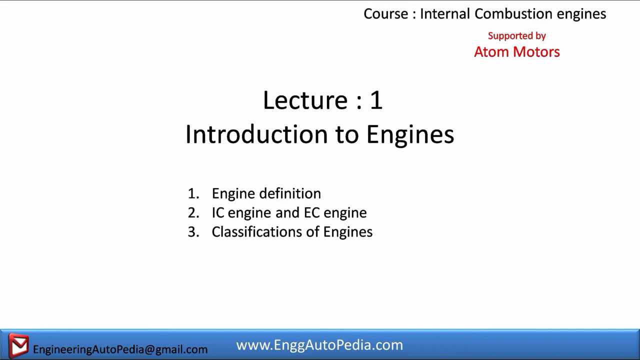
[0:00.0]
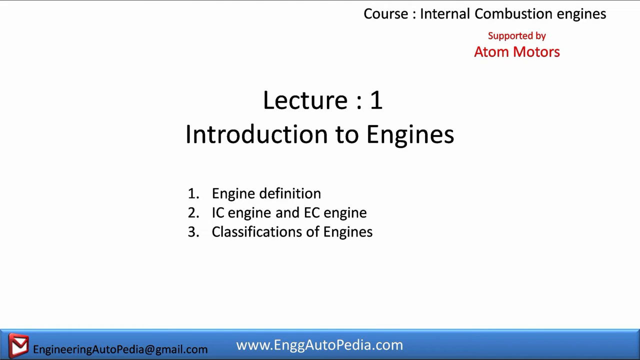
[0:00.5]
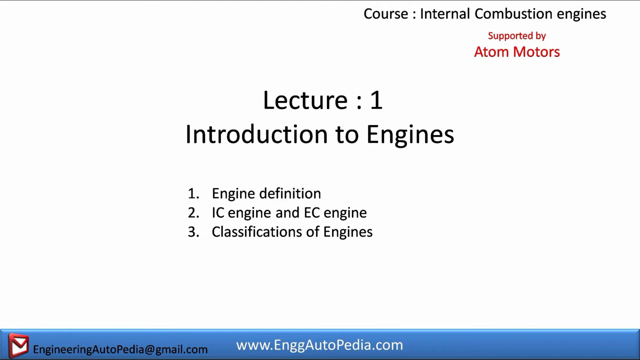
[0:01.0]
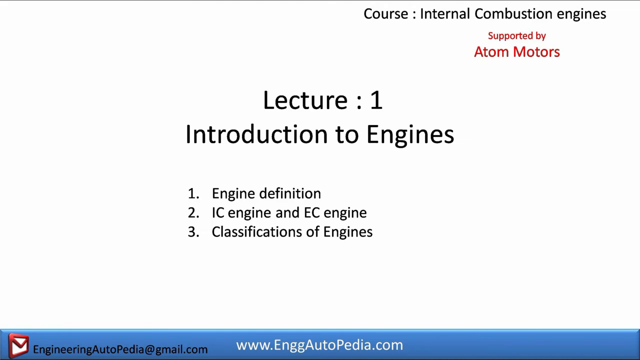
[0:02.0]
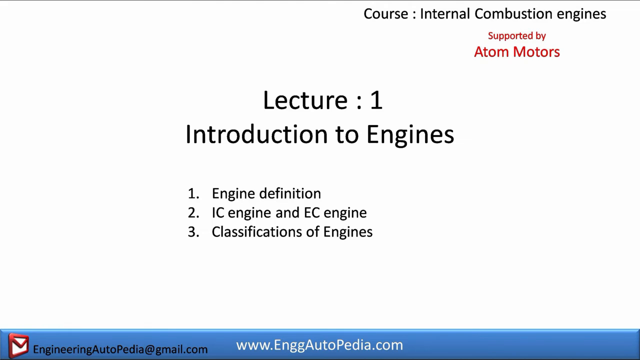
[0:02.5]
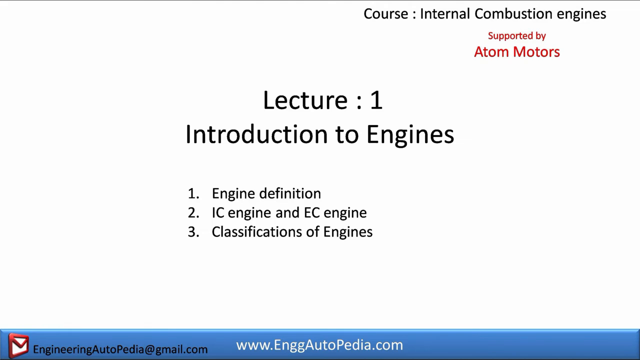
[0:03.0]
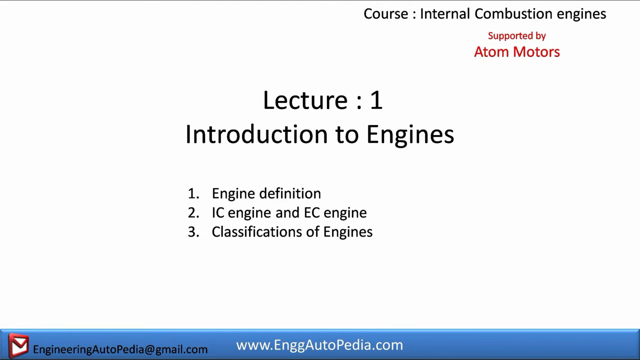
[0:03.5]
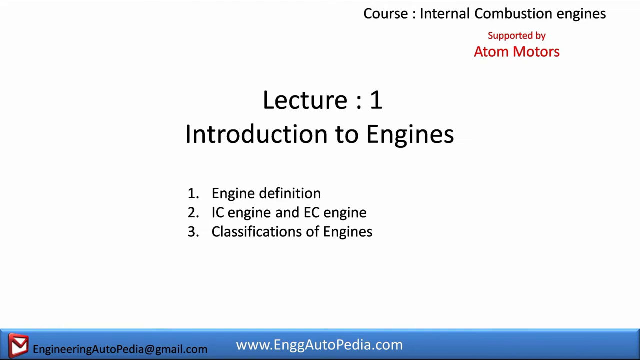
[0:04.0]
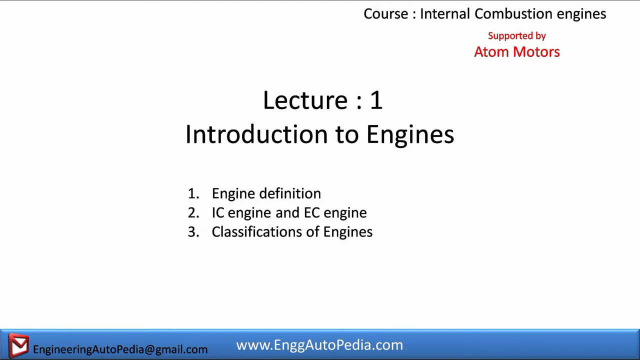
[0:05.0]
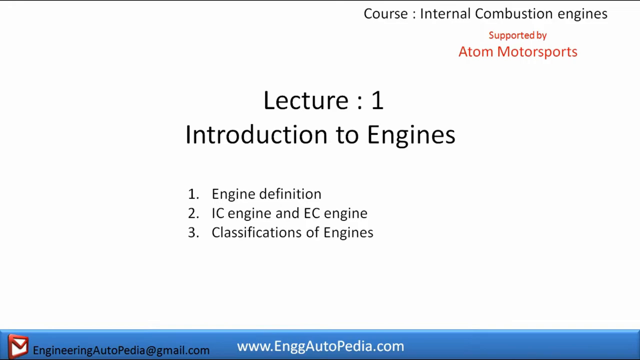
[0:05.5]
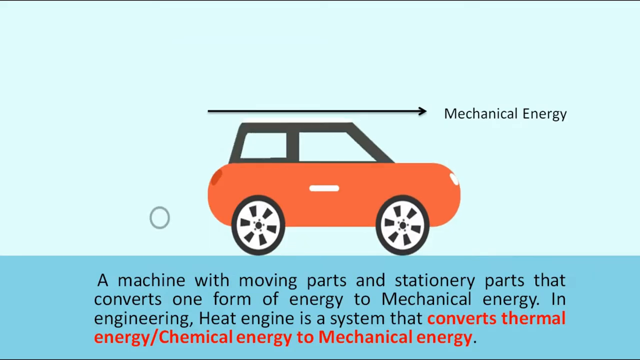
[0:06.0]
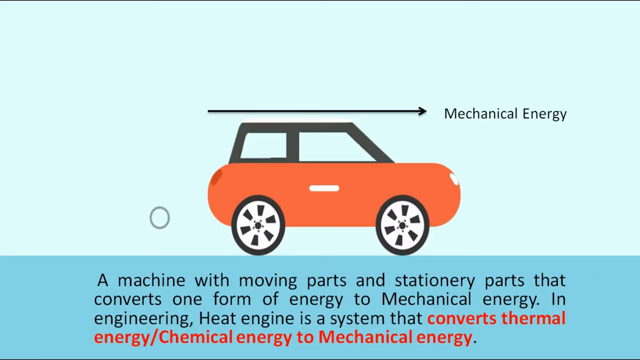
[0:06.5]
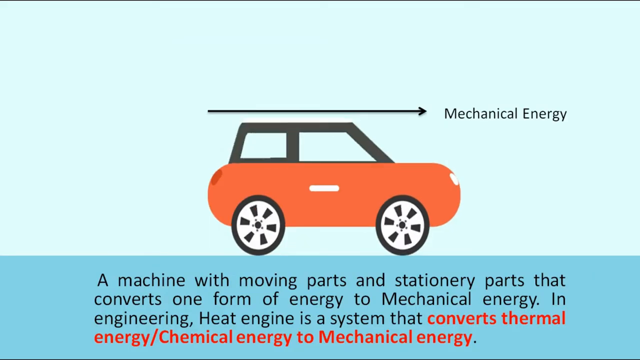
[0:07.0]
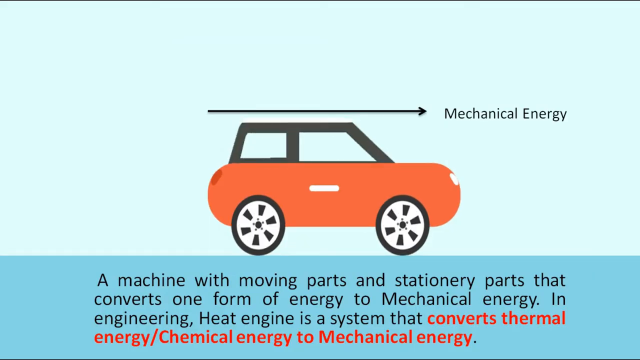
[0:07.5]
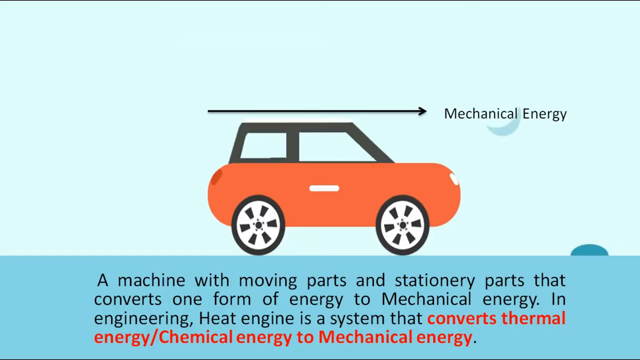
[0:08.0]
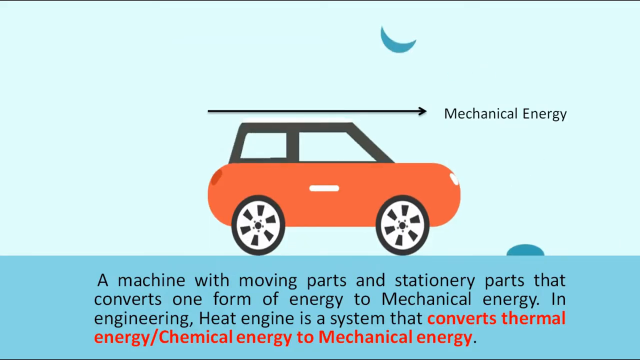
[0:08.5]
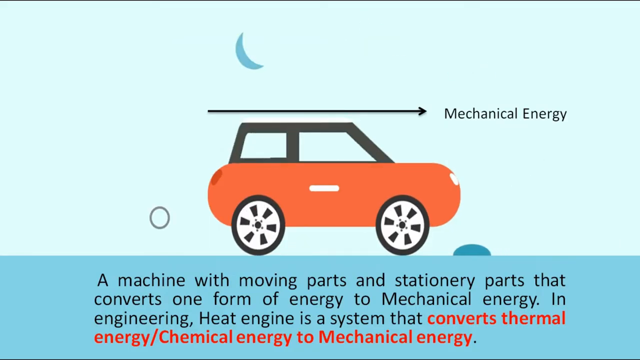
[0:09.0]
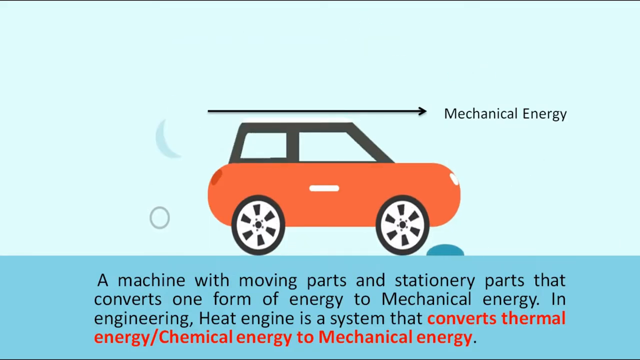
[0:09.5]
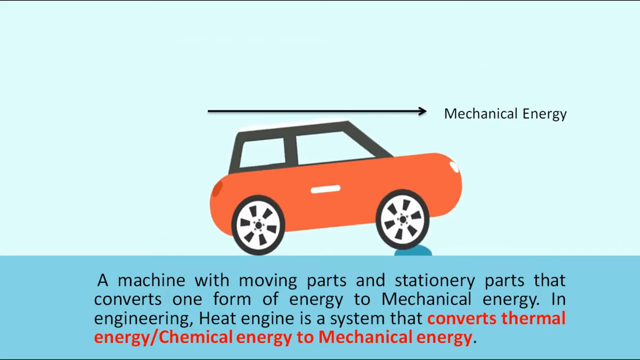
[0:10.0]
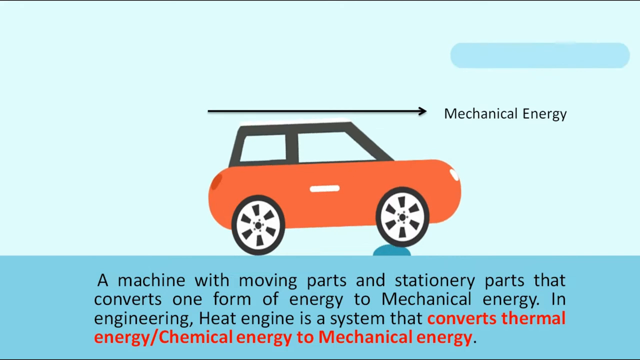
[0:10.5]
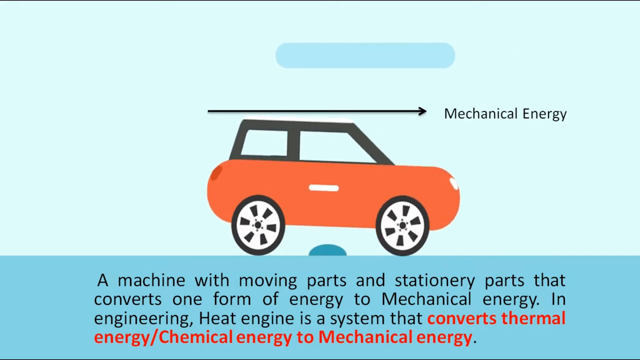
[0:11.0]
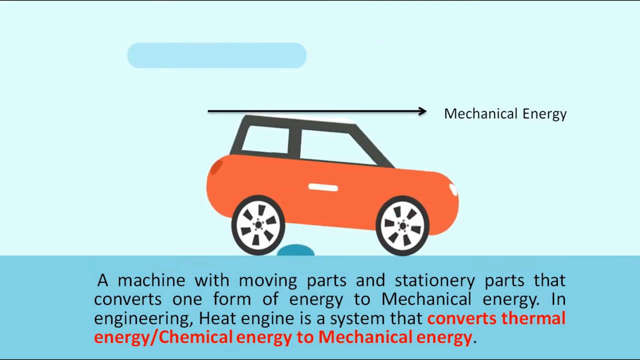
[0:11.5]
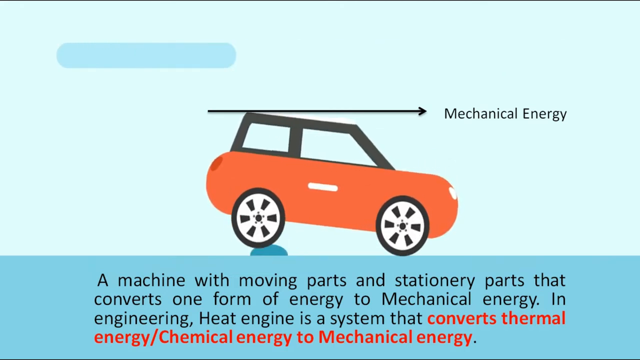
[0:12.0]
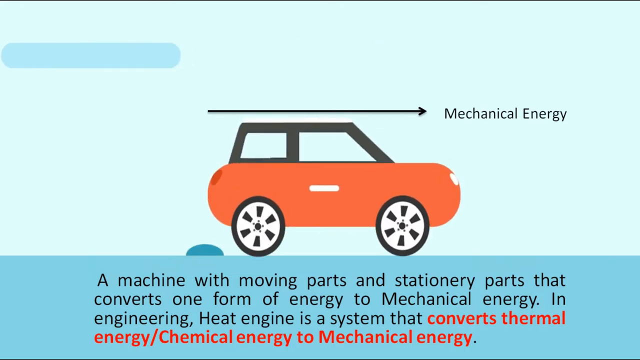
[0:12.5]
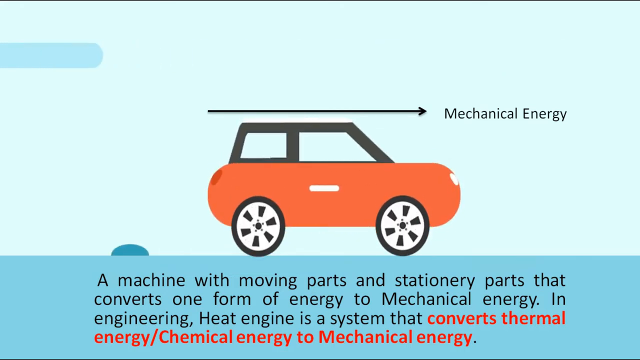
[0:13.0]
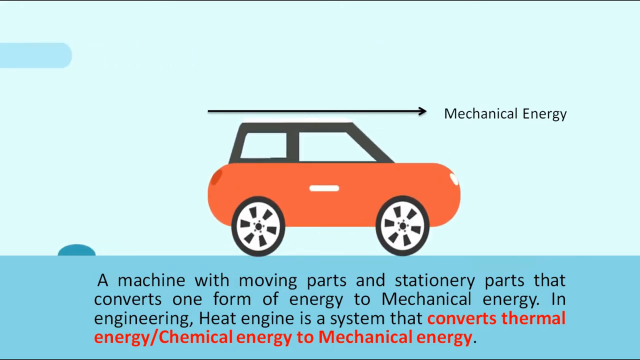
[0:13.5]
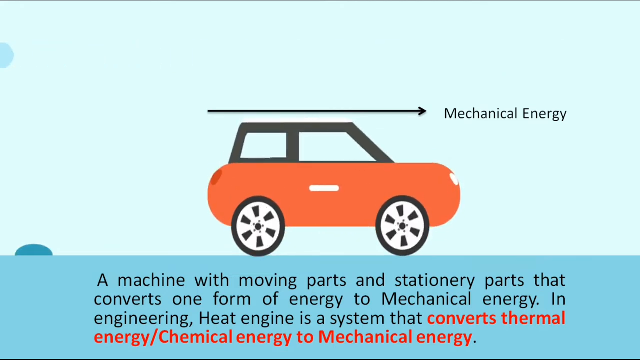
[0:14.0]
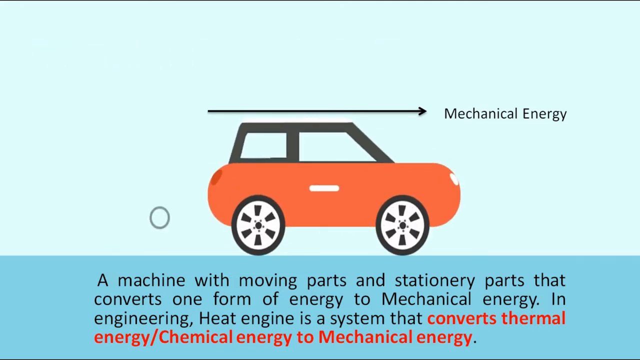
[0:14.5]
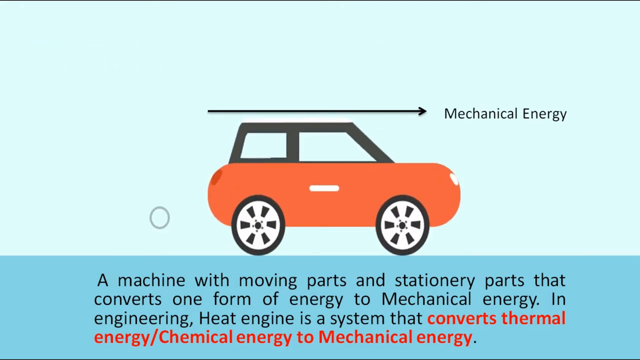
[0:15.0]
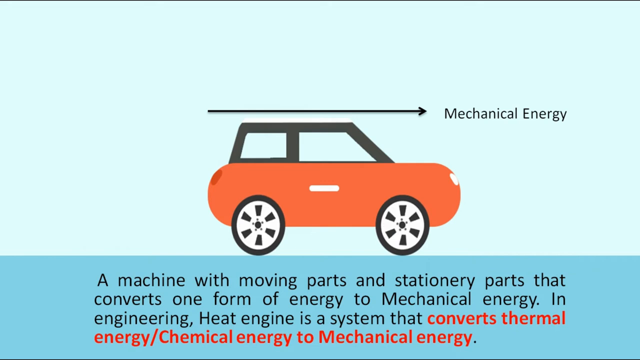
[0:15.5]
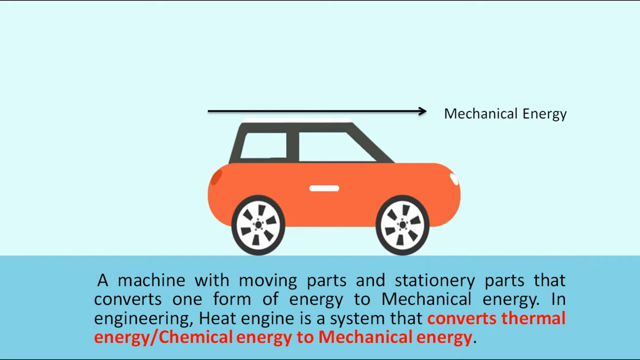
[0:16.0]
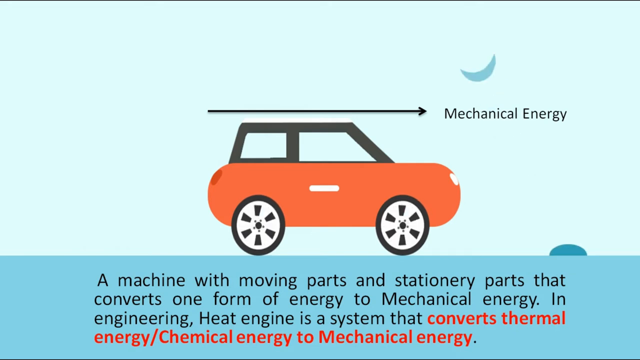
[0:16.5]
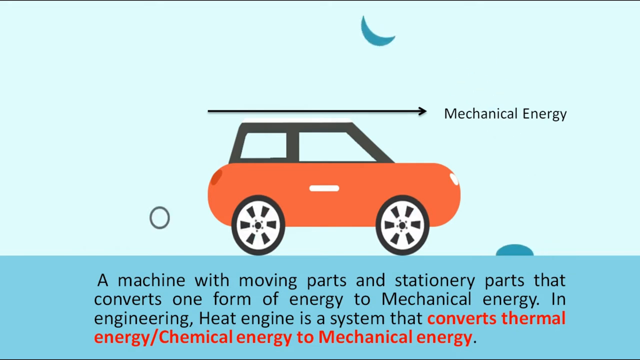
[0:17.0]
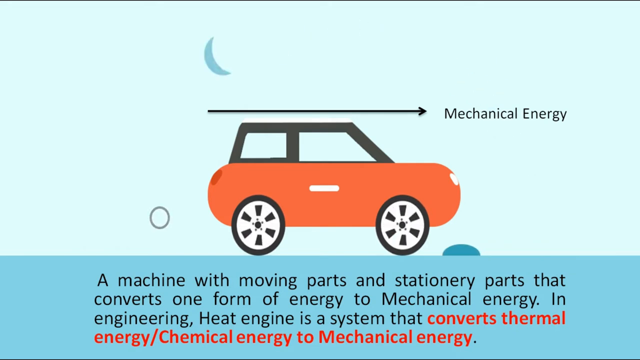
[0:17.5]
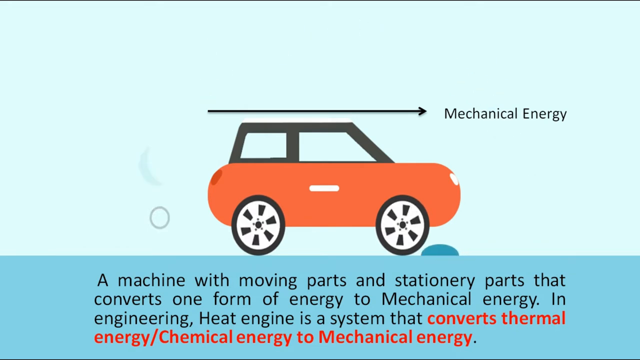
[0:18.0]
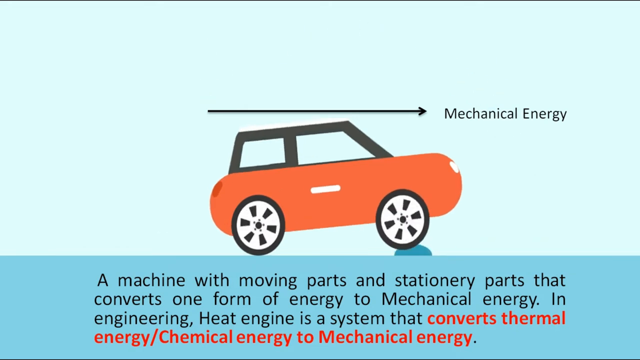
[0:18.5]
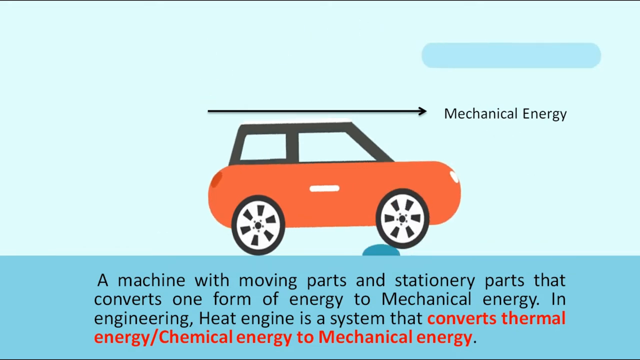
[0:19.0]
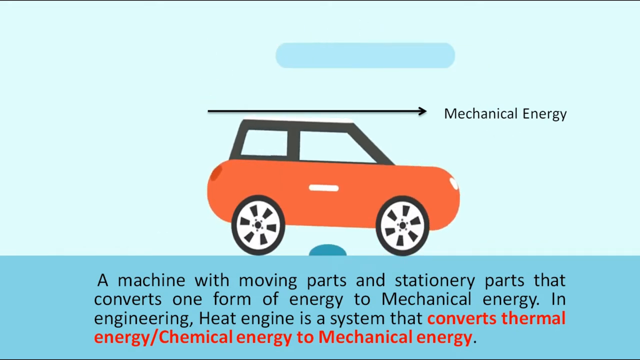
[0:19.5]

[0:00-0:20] The video appears to be a PowerPoint presentation. It opens on a slide with a white background. At the top right it reads "course internal combustion engines," and below that red text reads "supported by atom motors." In the middle of the slide it reads "lecture one introduction to engines," followed by three lines: "one engine definition," "two IC engine and EC engine," "three classifications of engines." At the bottom is a blue band with white text reading "www.enggautopedia.com." The video then transitions to the next slide, where an orange car appears to be driving toward the right but stays stationary in the middle of the slide, with only its wheels rotating clockwise. Little bumps appear and slide from right to left, and the car drives over them. An arrow above the car points to the right and is labeled "mechanical energy." At the bottom is a blue section, or the road, below the car, with black text over it reading "a machine with moving parts and stationary parts that converts one form of energy to mechanical energy. In engineering heat engine is a system that converts thermal energy / chemical energy to mechanical energy." The orange car drives over one bump and then another coming from the right: each bump moves from right to left, and the front tire and then the back tire go over it. The slide then appears to transition to another one showing a steam engine.